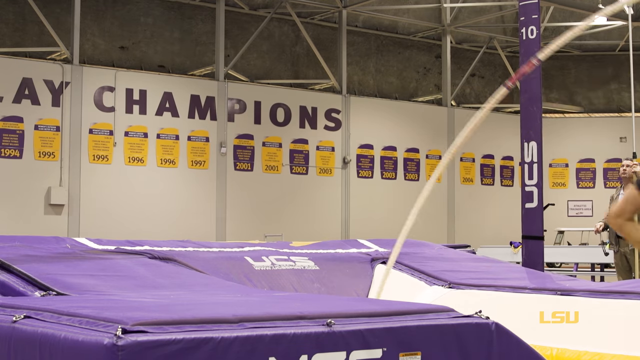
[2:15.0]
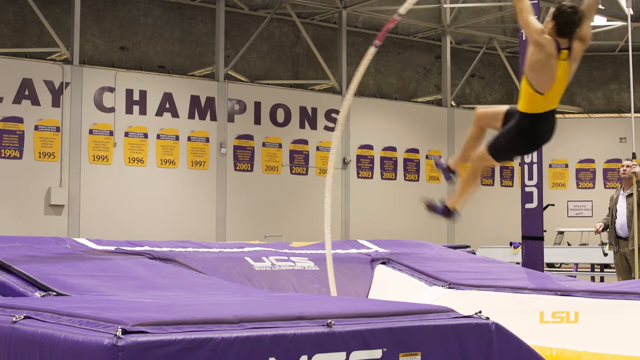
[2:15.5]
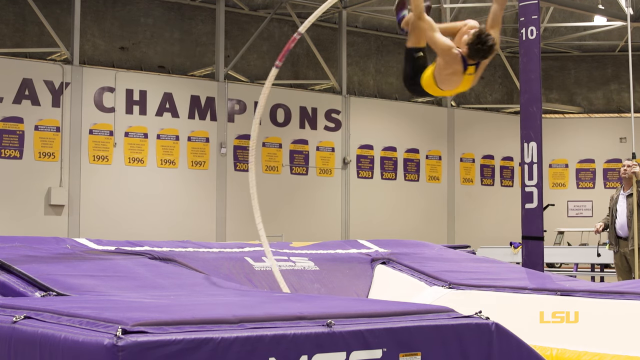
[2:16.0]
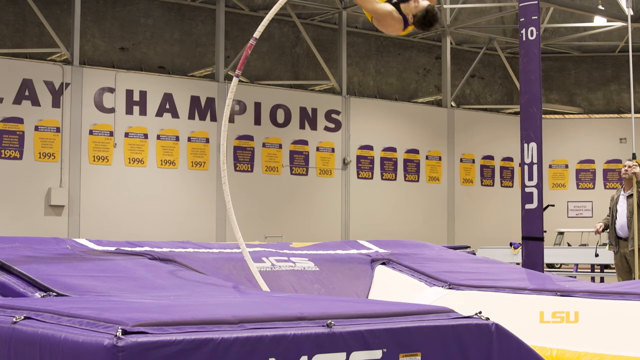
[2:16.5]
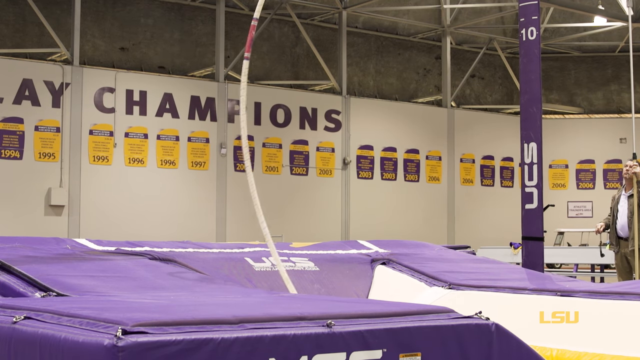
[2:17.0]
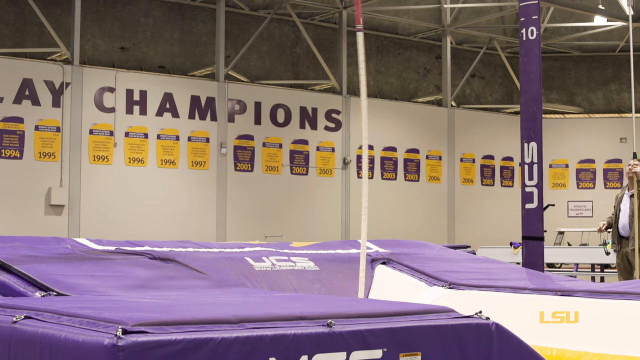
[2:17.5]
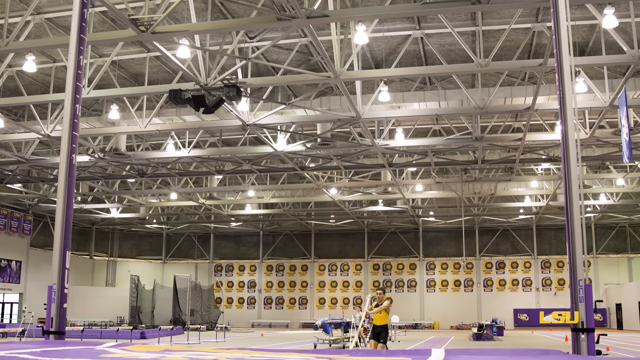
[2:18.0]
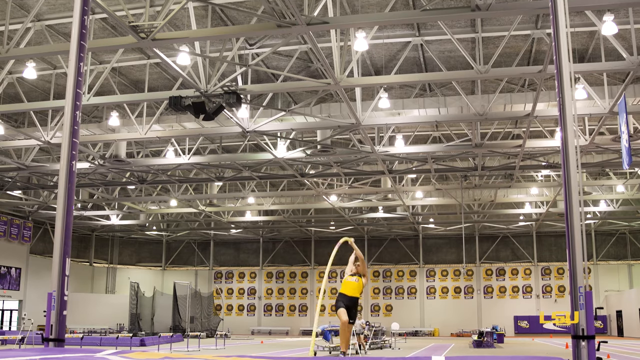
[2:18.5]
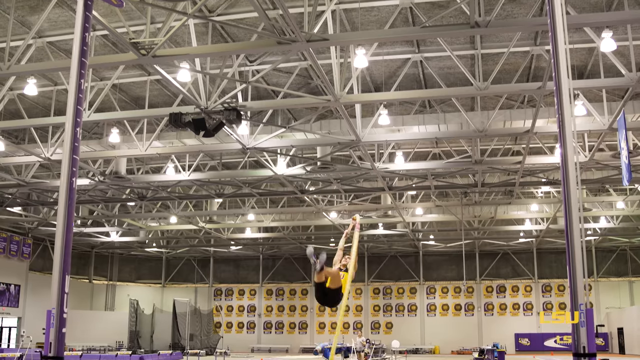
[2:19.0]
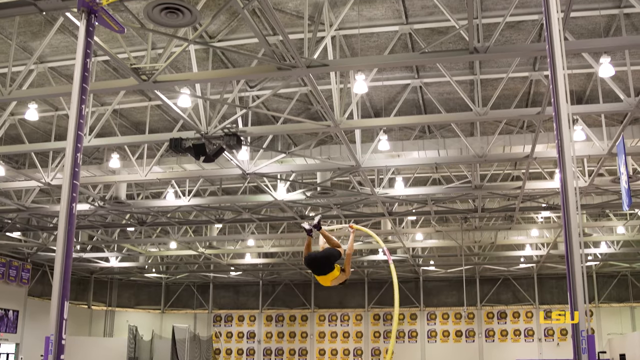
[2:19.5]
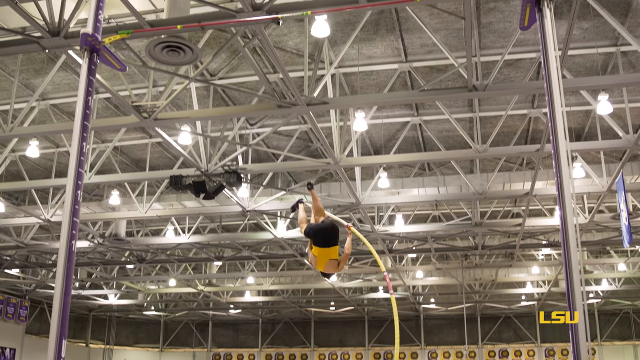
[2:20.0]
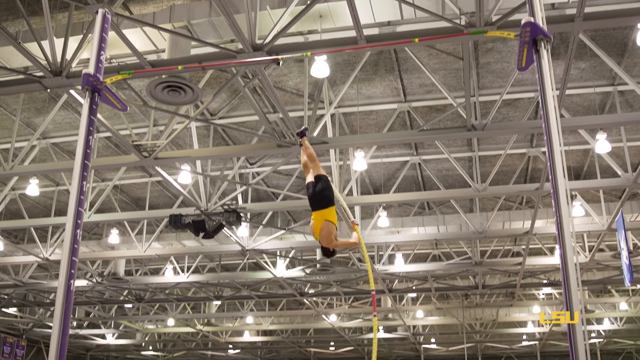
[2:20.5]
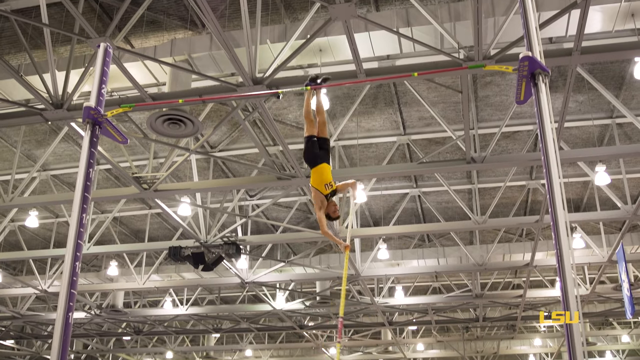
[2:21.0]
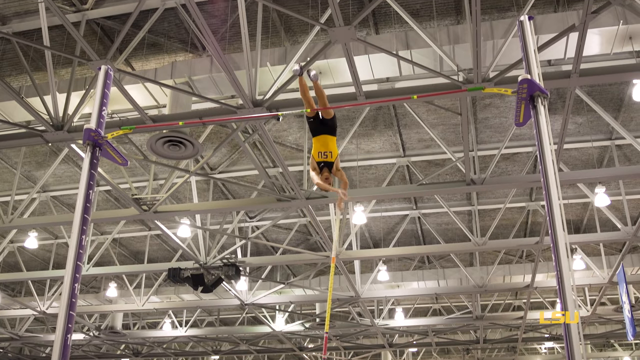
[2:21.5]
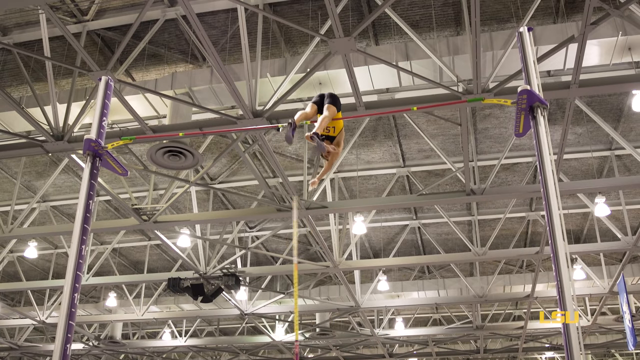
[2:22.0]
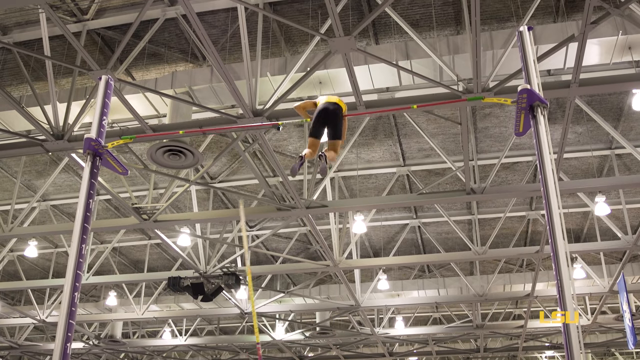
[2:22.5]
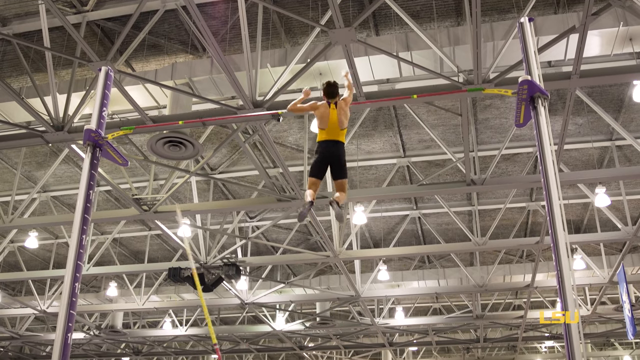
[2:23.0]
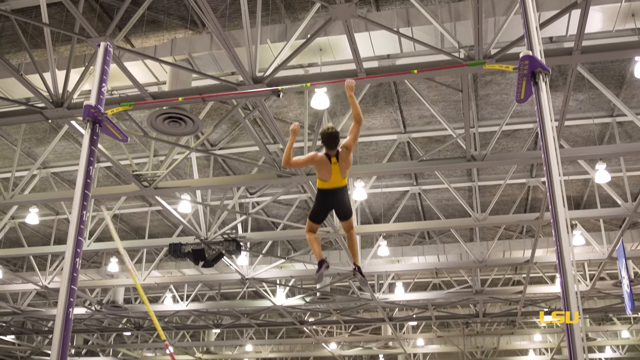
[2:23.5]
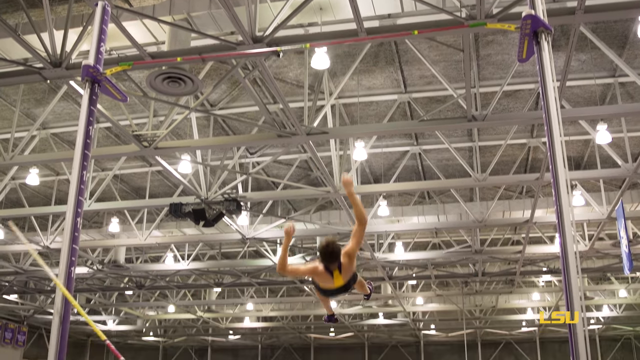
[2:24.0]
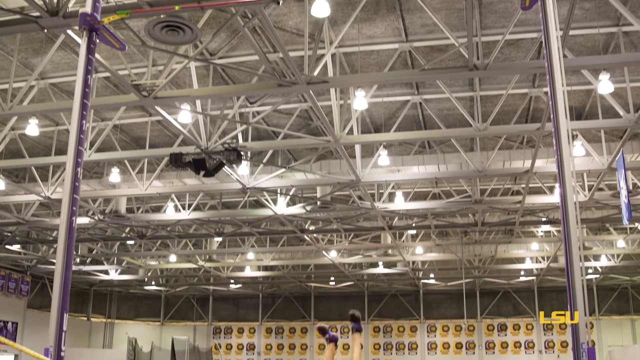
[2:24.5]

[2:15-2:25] A student athlete performs a pole vault. A helper in the background is probably holding the pole so it stays still. Another shot has the camera facing the student instead of beside him. He successfully hops over the bar, though he seems to touch it once again; the pole here is red, and the height is around 17 to 18 feet. The gym is very bright, with all the lights shining. The helper wears a beige top, beige pants and a white shirt, and is apparently the coach. The wall shows that LSU has been champion for multiple years, spanning decades.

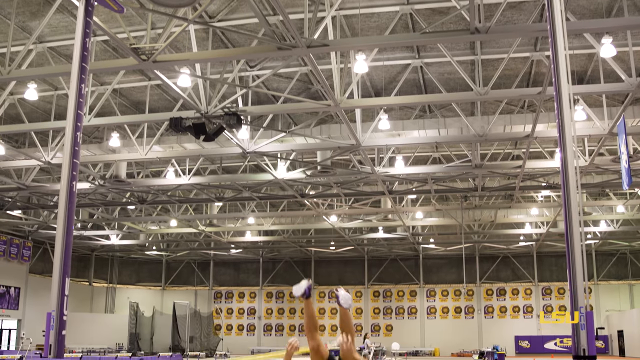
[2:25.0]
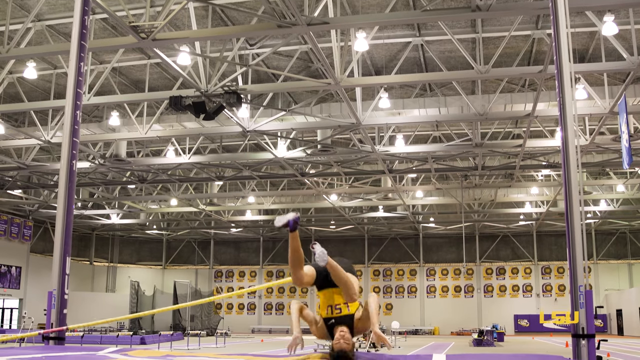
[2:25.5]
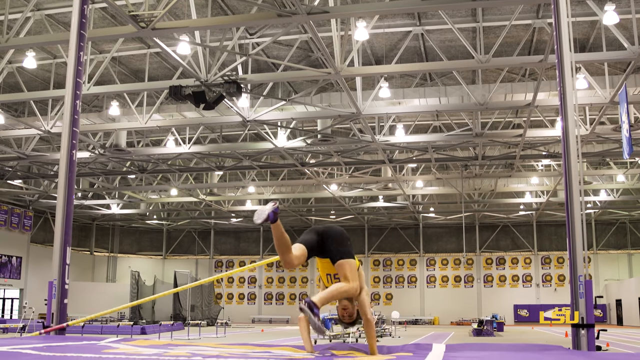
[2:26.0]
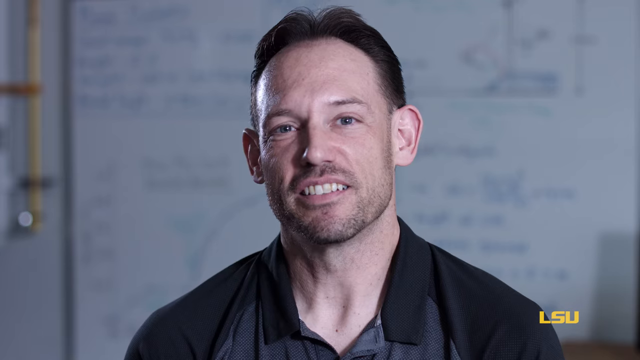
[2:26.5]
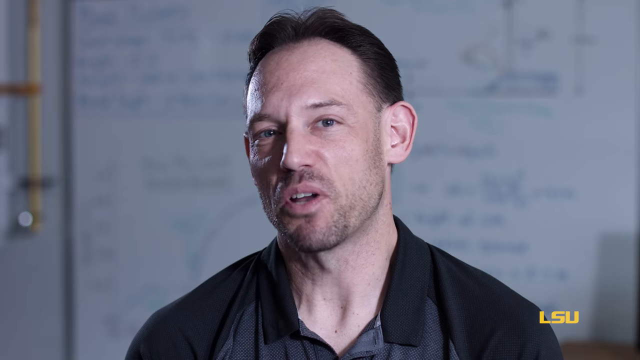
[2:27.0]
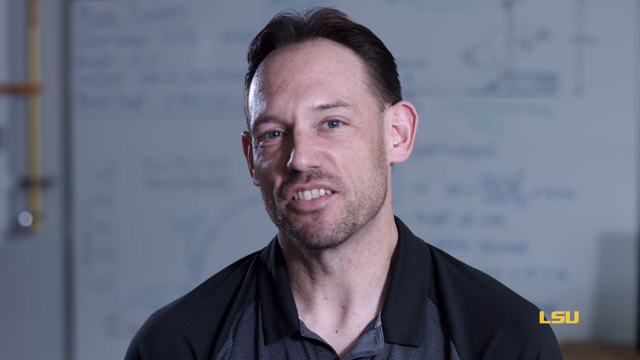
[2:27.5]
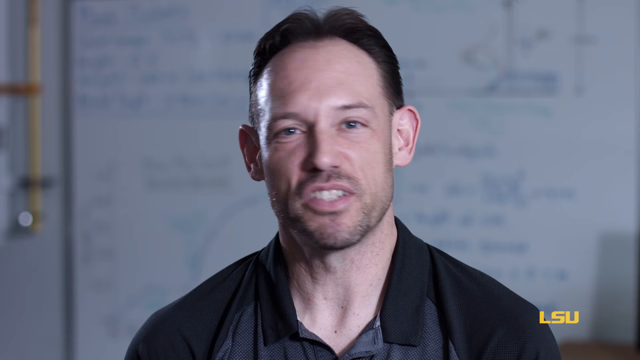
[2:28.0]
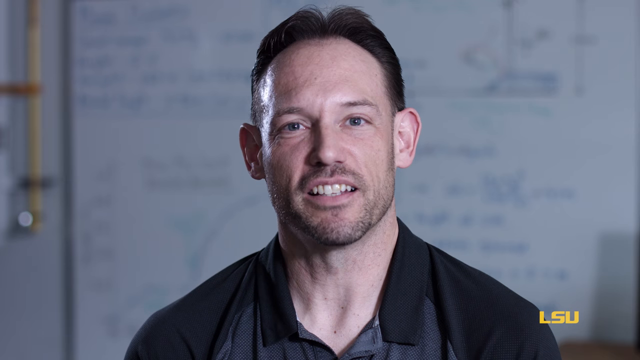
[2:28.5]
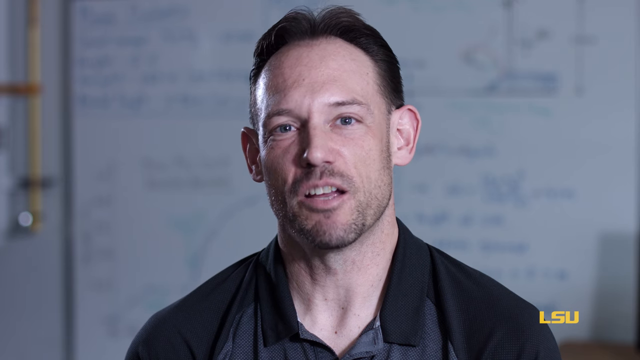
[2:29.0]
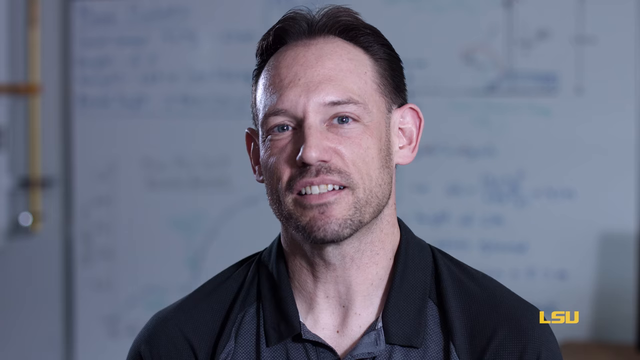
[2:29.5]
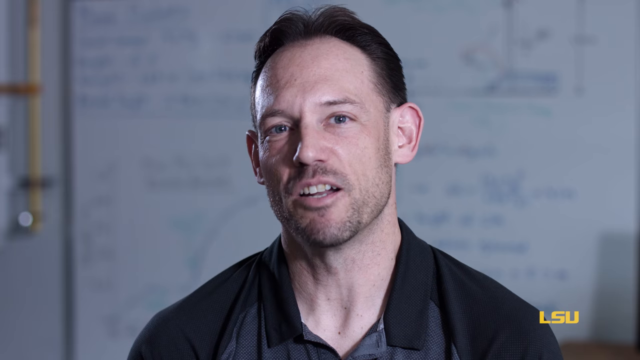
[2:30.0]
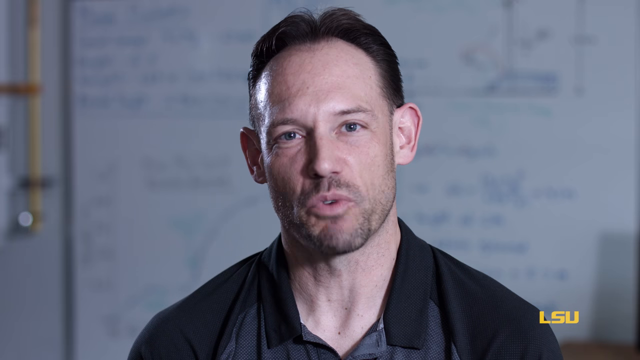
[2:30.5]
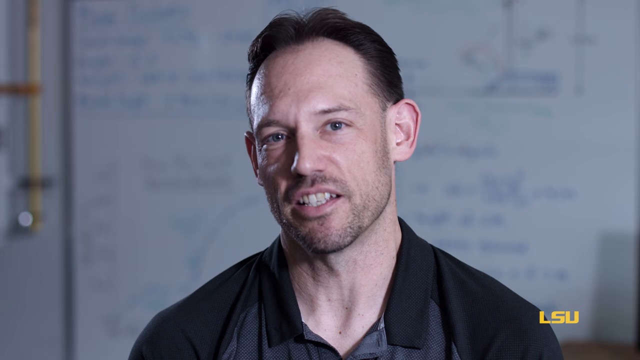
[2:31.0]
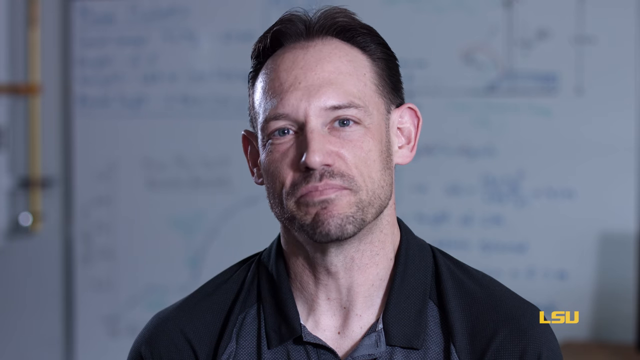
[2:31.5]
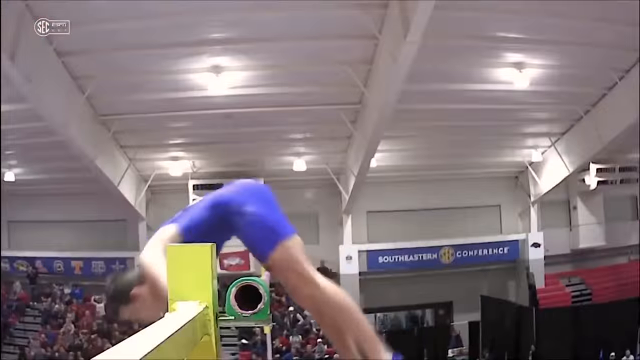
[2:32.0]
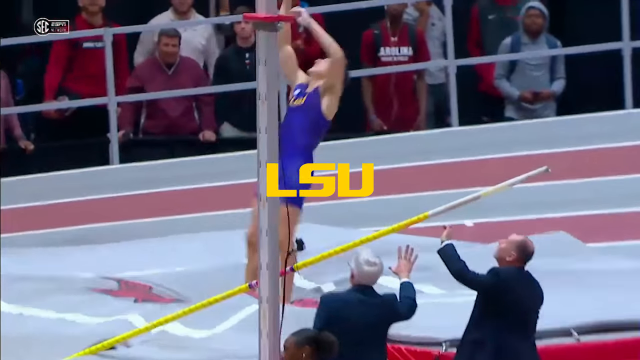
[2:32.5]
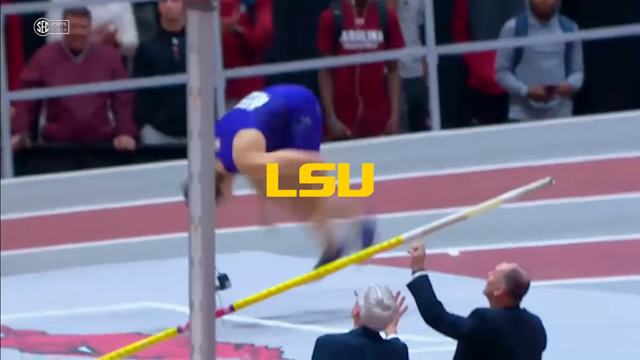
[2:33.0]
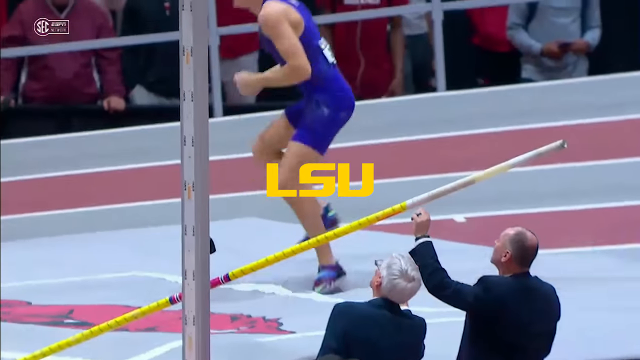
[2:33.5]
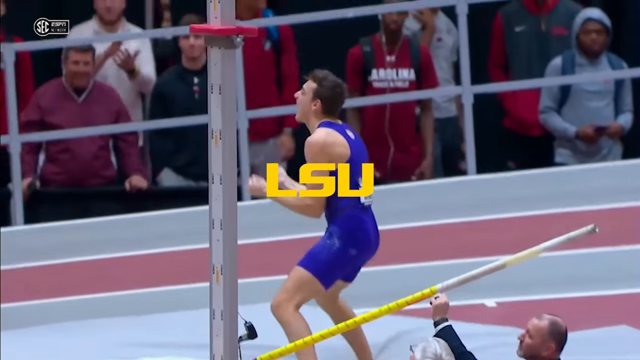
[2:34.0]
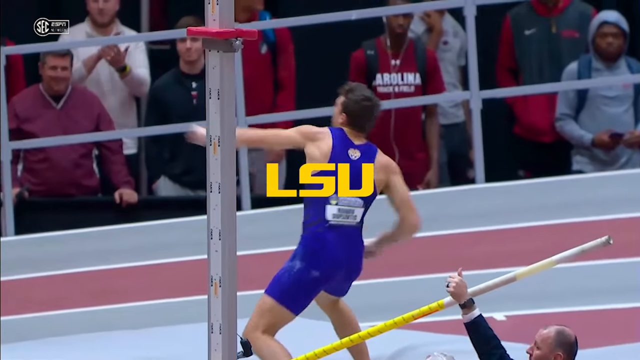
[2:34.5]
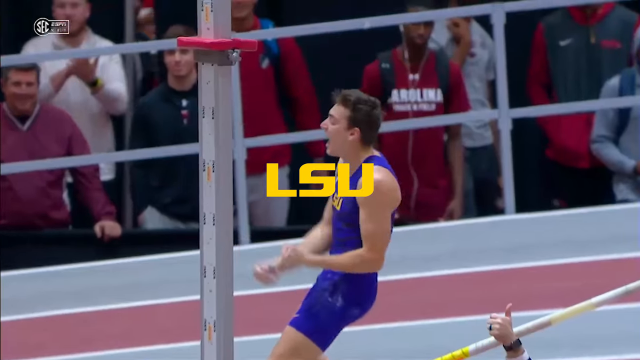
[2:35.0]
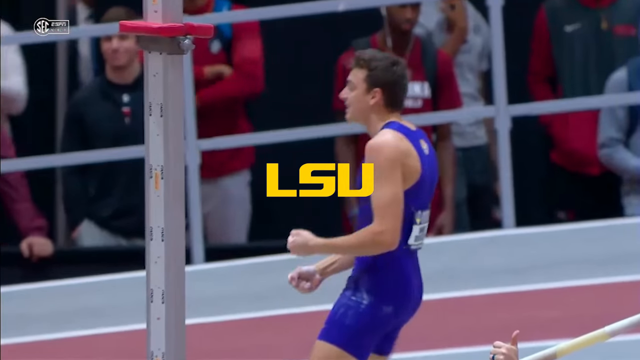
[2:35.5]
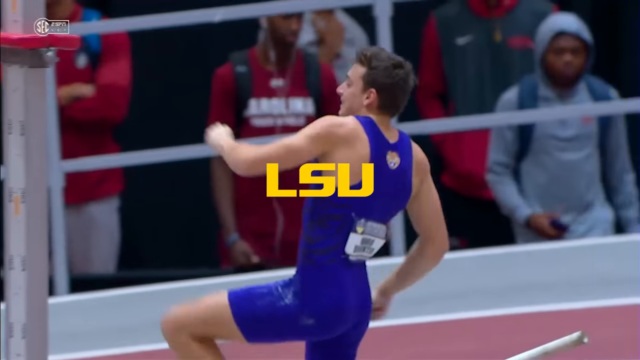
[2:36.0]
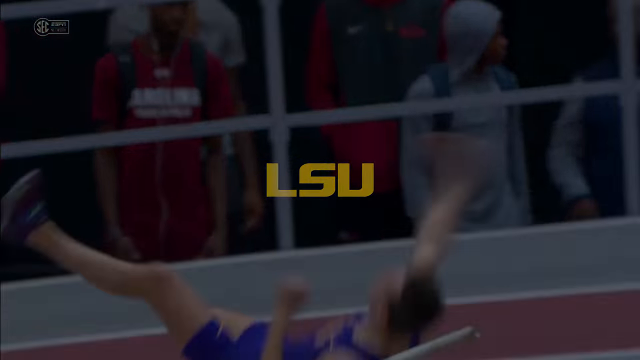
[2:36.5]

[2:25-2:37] The vaulter gets over the bar and tries to get back his balance, standing up on the pad. His coach is shown once again, wearing all black and talking to the camera, seeming very proud of the student. Snippets of what he did before follow, showing how he got the pole vaulting record. Other videos then appear on the left side of the screen, showing "LSU athletics featuring Andrew" and "fighting breast cancer two fronts," with various doctors in a thumbnail. In the last sections, no other people appear to be celebrating the student's success. A judge in the background holds the pole.